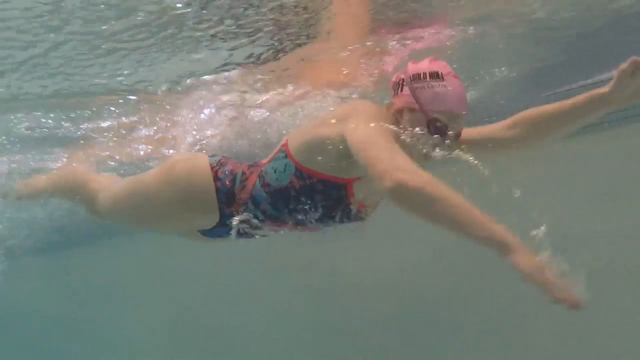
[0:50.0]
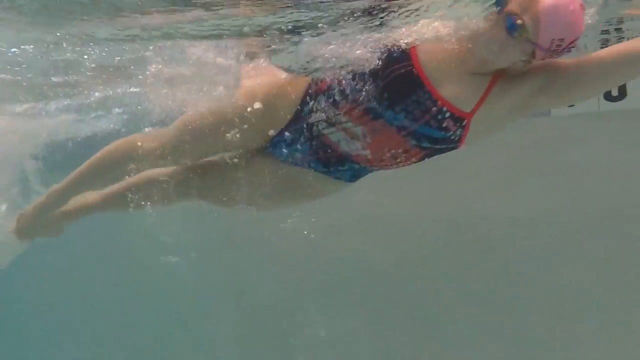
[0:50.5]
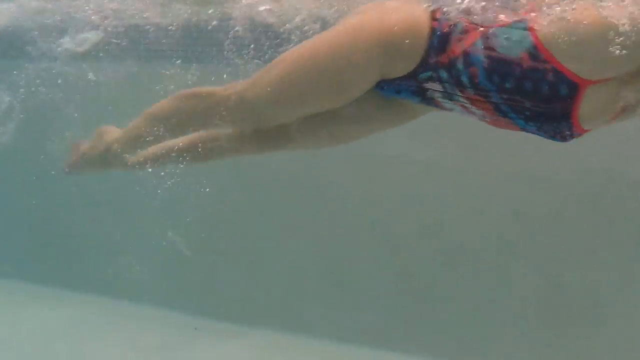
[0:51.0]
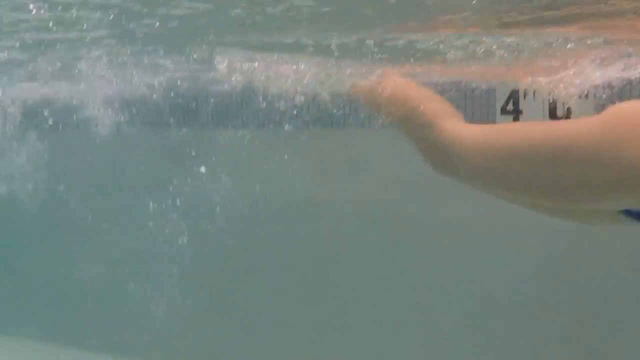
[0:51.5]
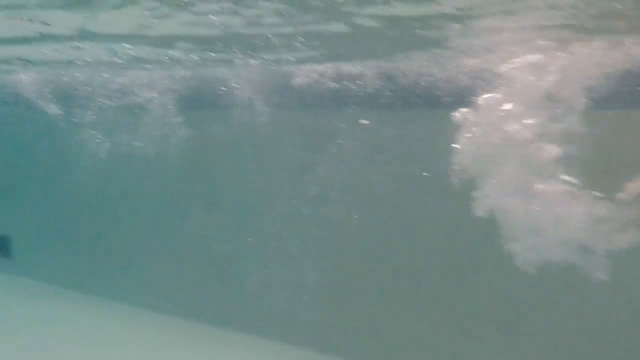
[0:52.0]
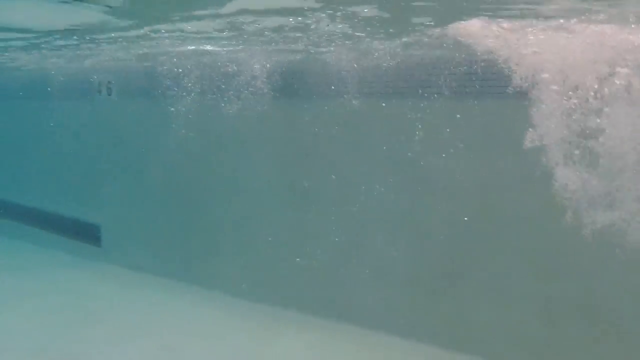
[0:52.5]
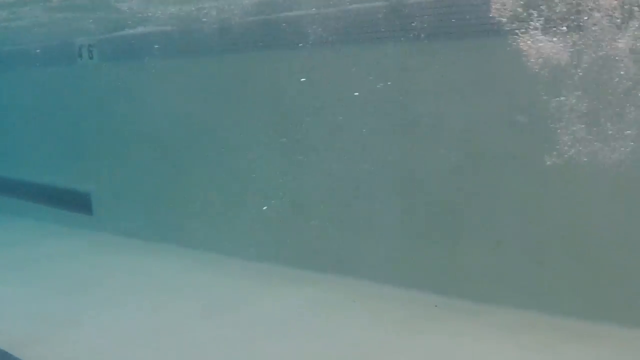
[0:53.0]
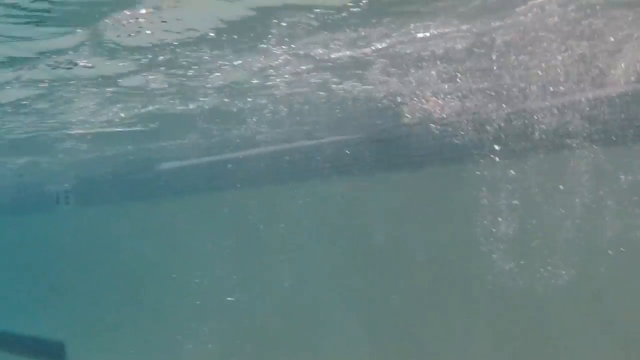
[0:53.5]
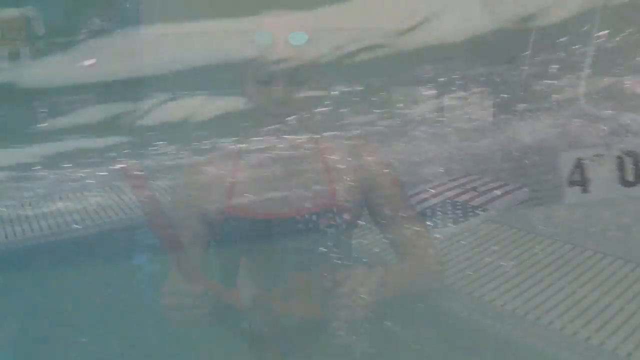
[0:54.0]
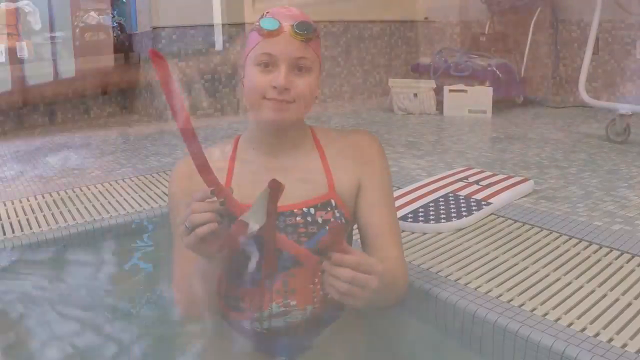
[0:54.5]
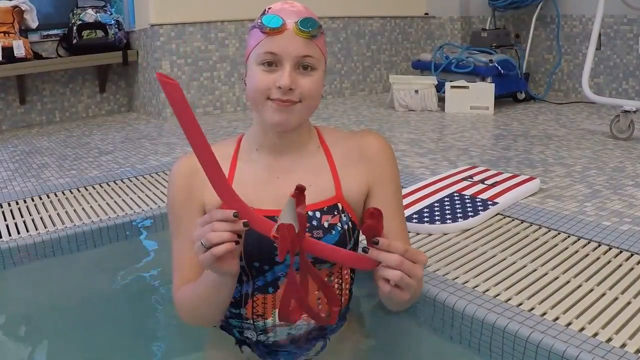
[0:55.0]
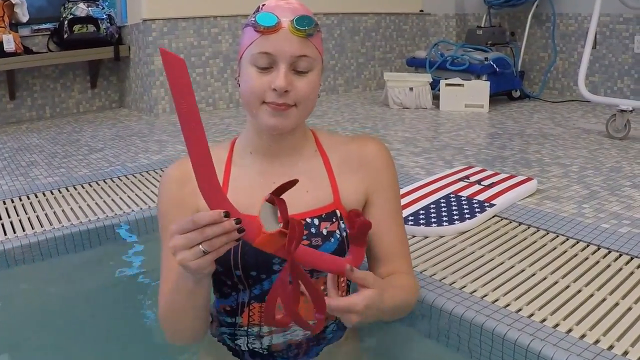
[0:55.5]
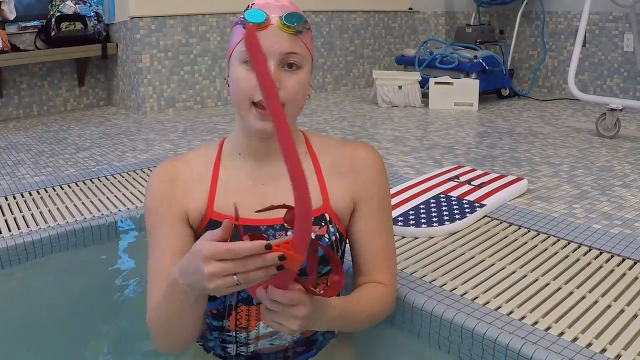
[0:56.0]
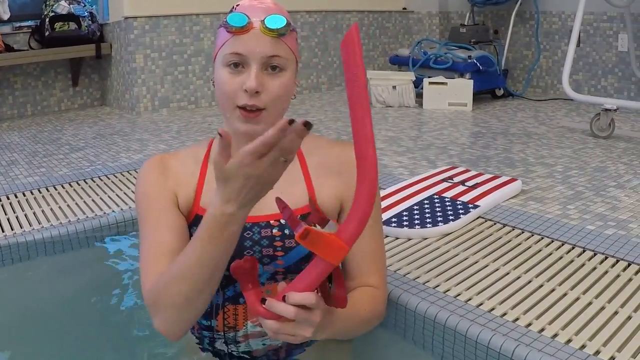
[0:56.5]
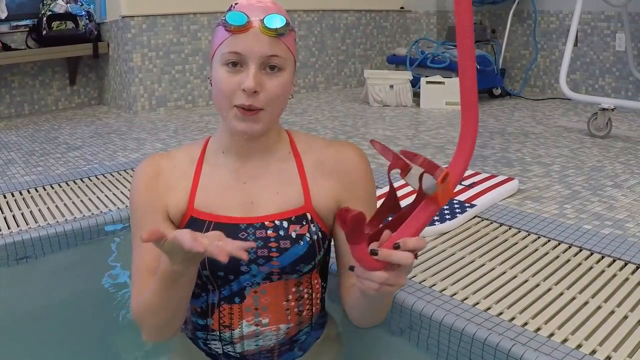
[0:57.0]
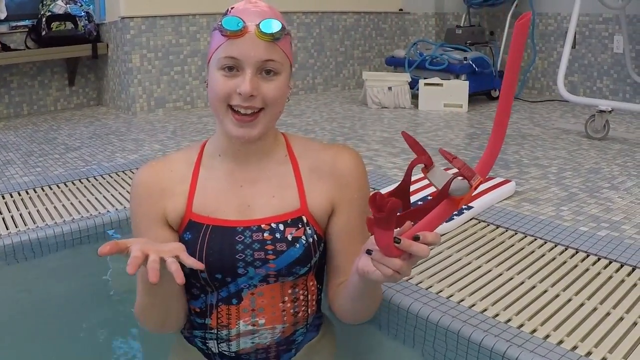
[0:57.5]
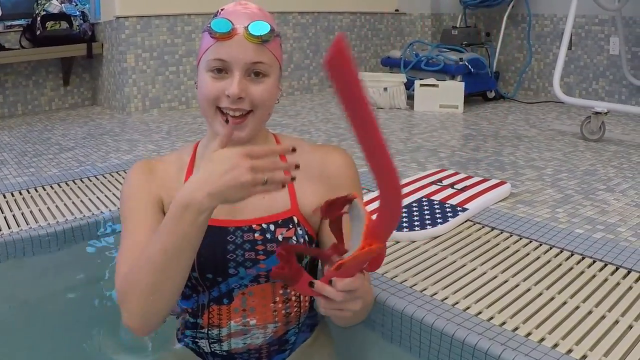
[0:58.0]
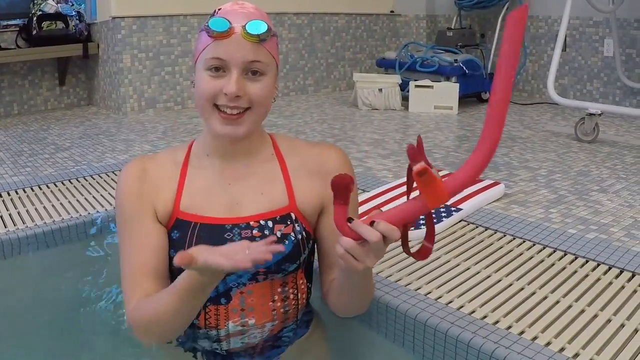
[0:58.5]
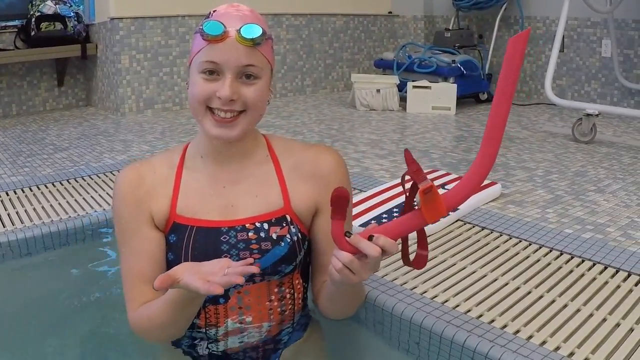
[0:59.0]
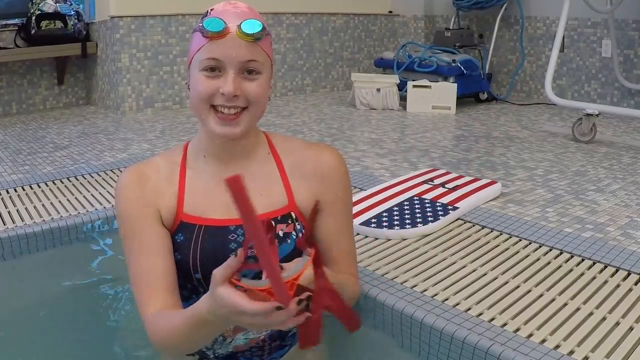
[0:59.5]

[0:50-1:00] A woman demonstrates swimming, doing a one-handed freestyle stroke to work one arm. She then shows scuba diving or snorkeling equipment: a red mask and snorkel. She kind of shakes it back and forth toward the camera and displays it with her hand. Behind her is a foam kickboard that looks like an American flag. She is still in the indoor pool. While demonstrating the snorkel she is halfway out of the pool with her goggles off her face; she appears to have brown eyebrows and brown eyes, and she is white, her skin not super pale. To the right is a rolling cart with a white frame that probably holds a clock. Along the sides of the pool are slatted drains where the water goes into the drain from the side.